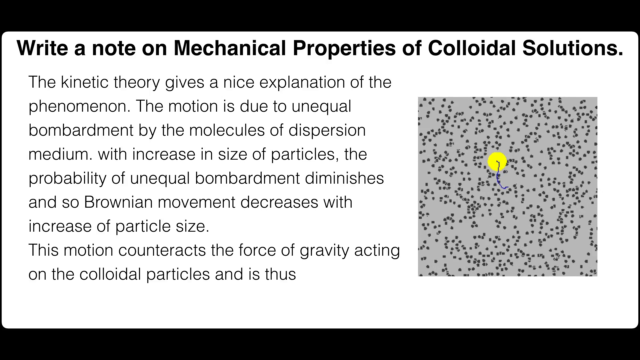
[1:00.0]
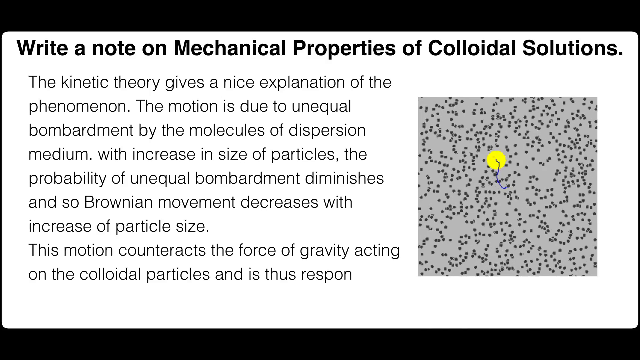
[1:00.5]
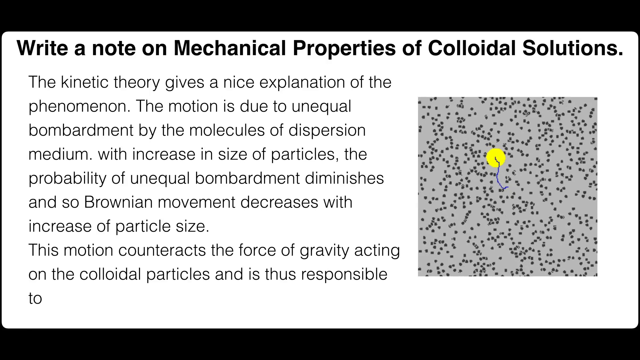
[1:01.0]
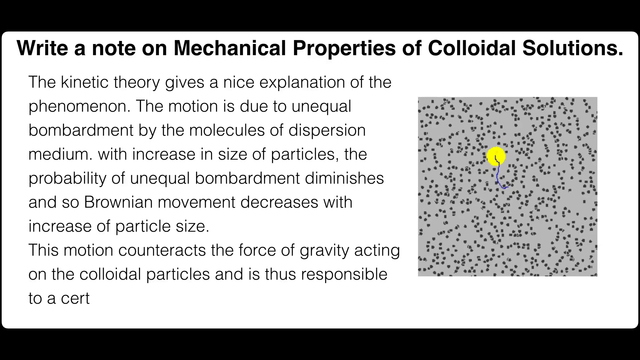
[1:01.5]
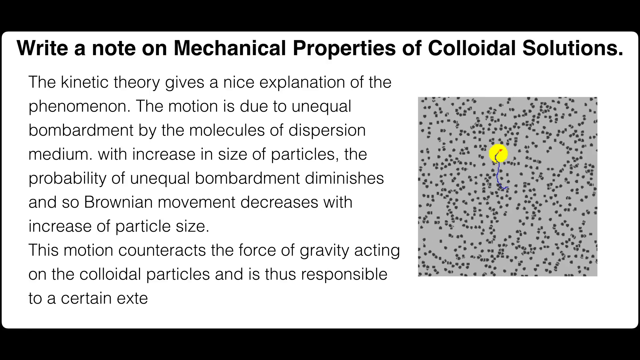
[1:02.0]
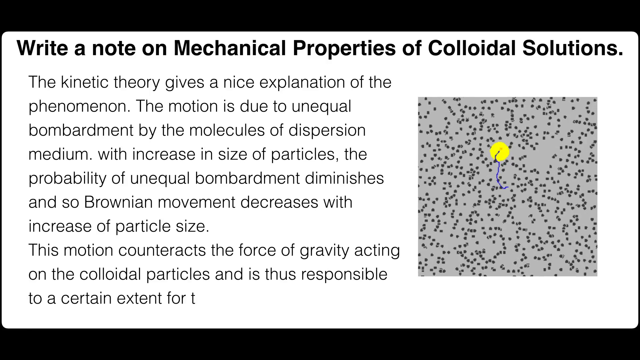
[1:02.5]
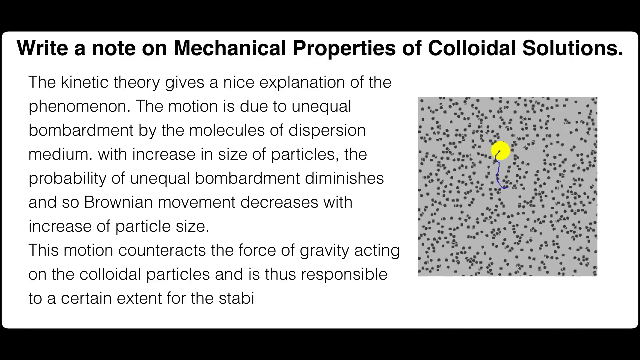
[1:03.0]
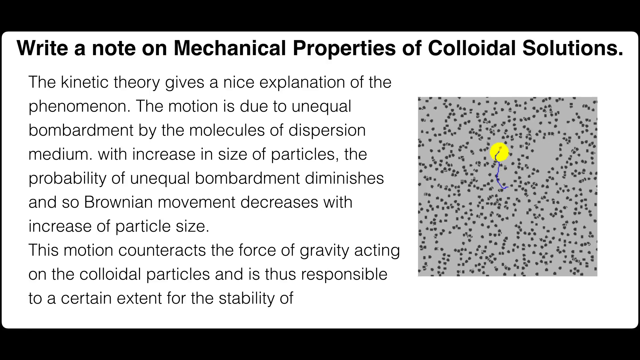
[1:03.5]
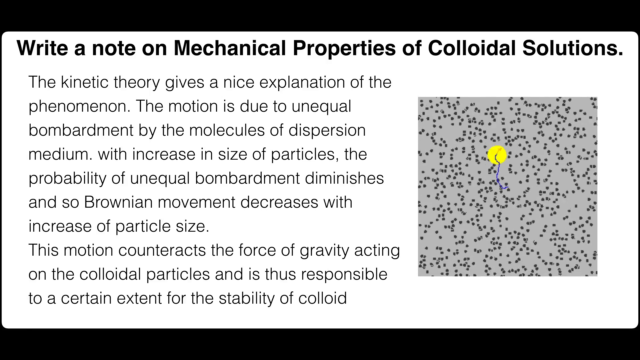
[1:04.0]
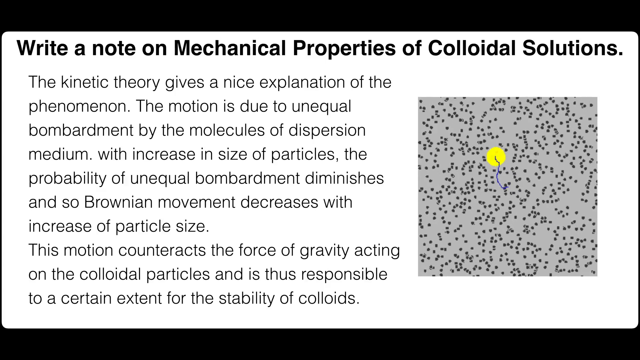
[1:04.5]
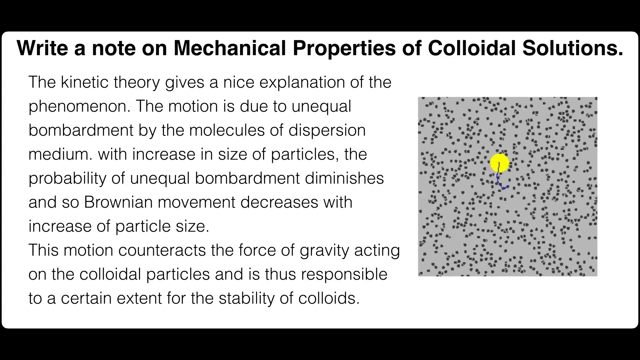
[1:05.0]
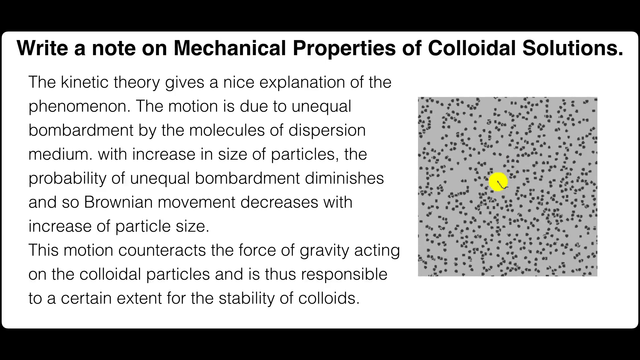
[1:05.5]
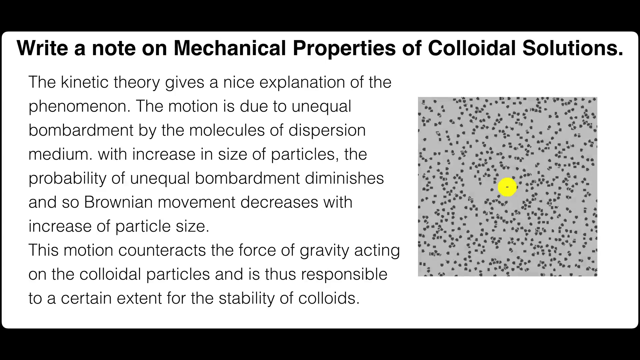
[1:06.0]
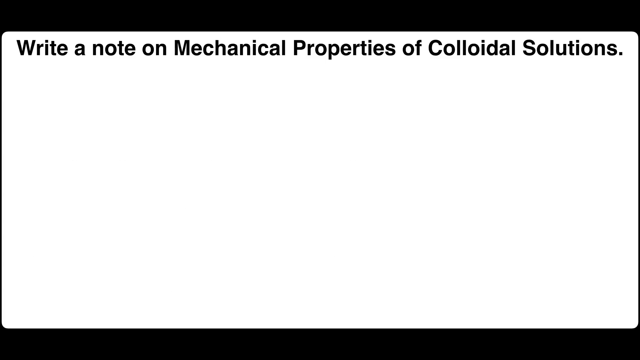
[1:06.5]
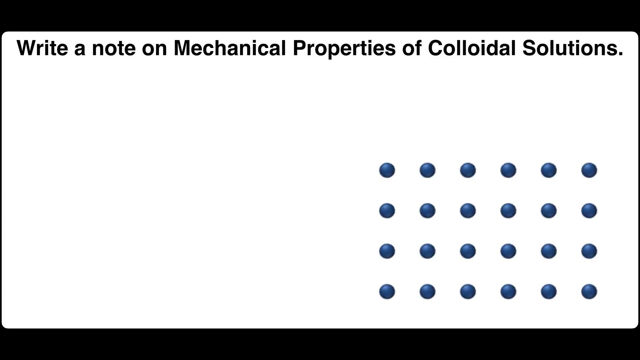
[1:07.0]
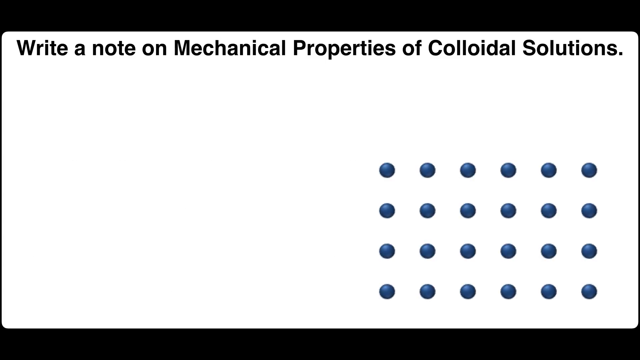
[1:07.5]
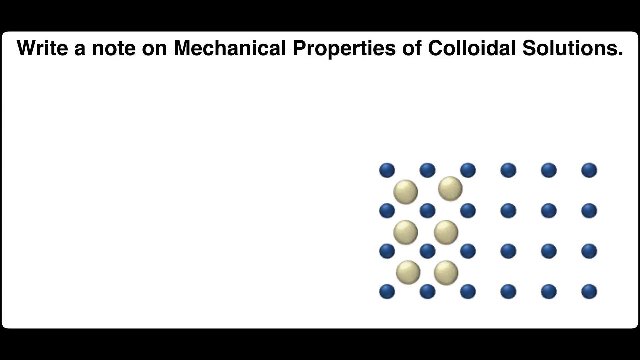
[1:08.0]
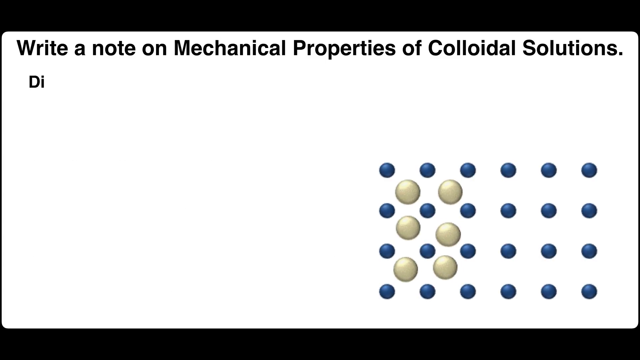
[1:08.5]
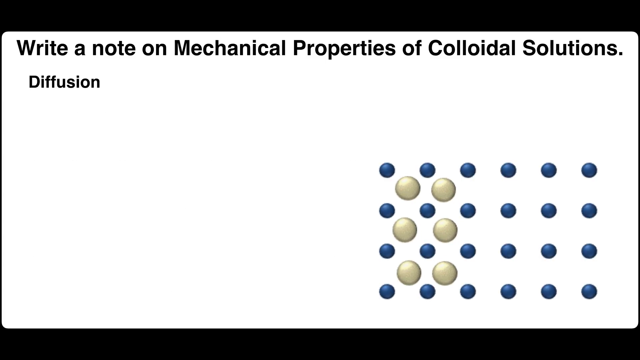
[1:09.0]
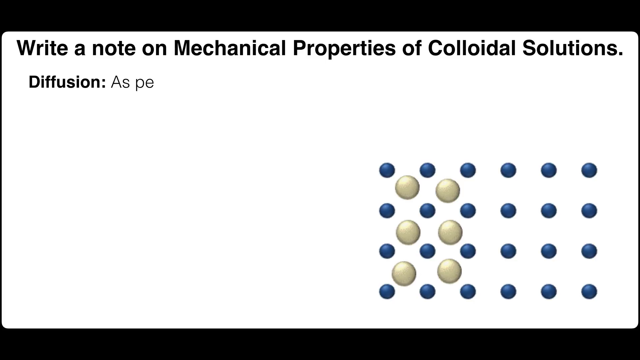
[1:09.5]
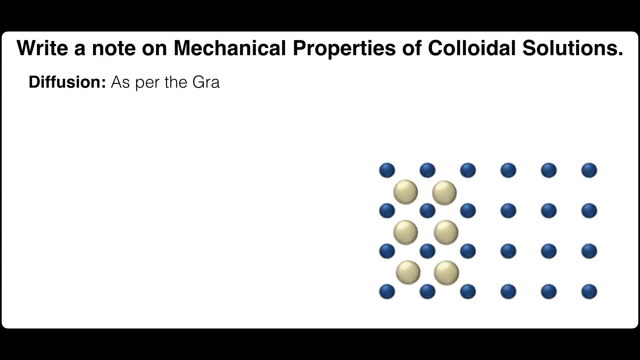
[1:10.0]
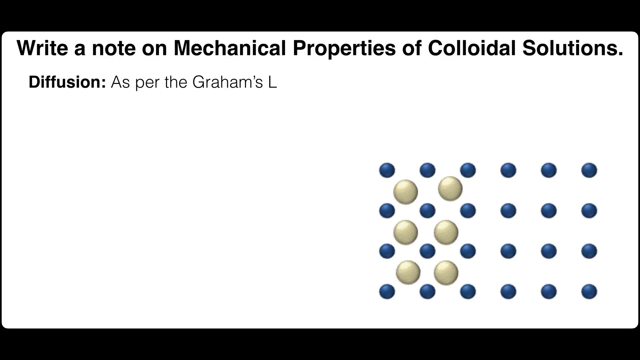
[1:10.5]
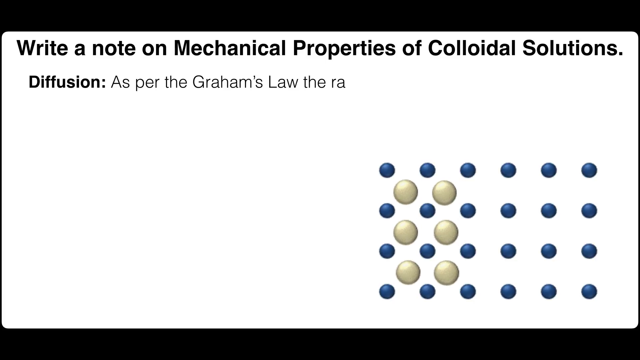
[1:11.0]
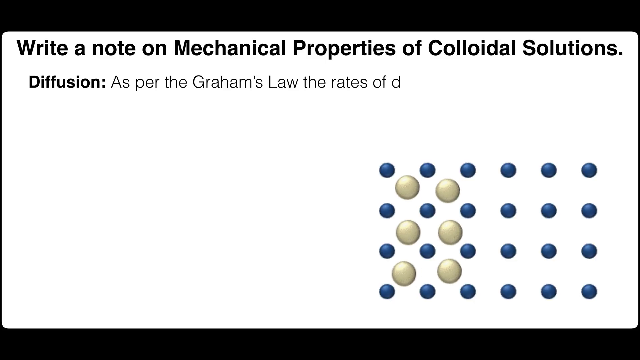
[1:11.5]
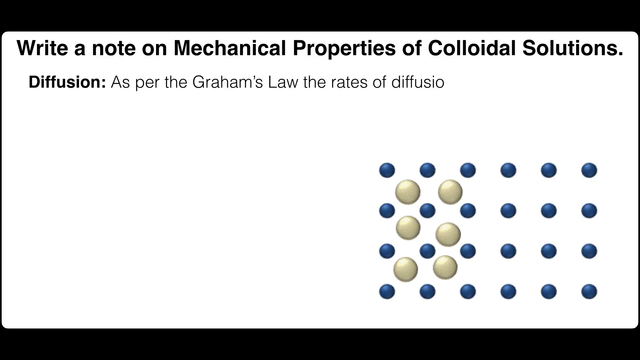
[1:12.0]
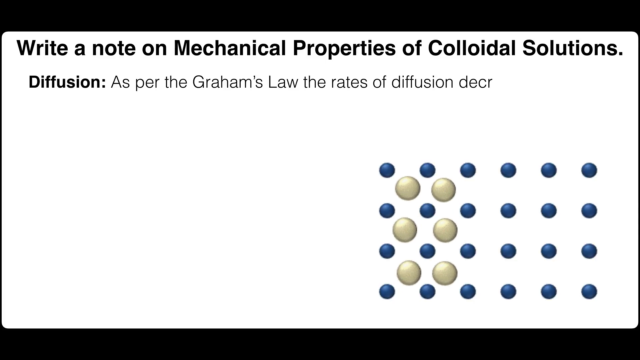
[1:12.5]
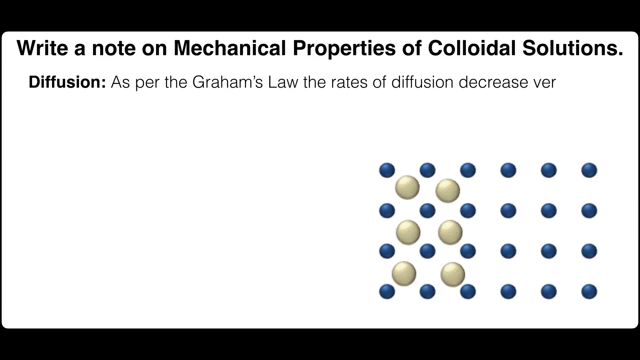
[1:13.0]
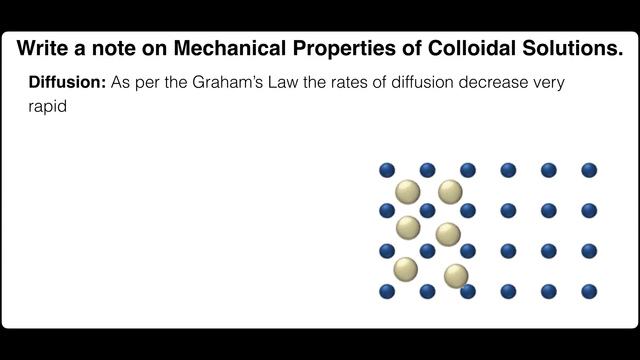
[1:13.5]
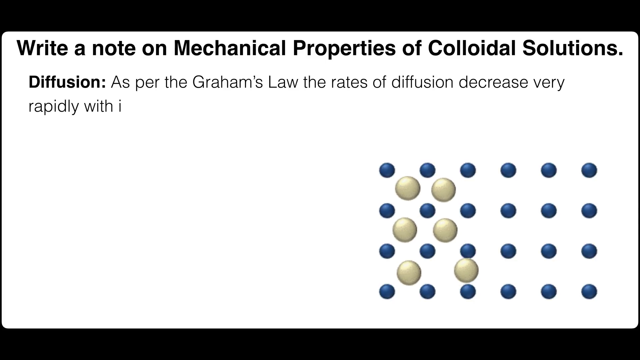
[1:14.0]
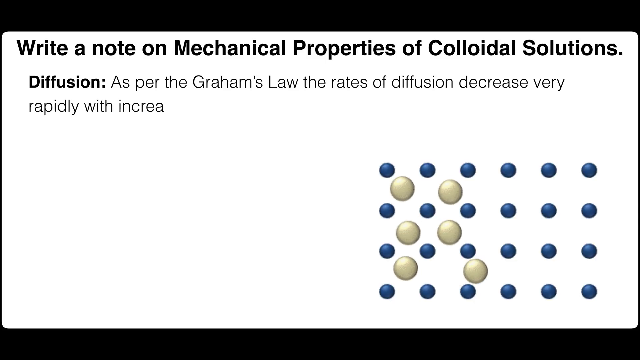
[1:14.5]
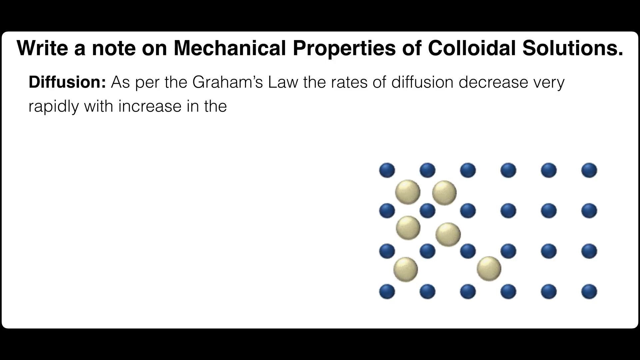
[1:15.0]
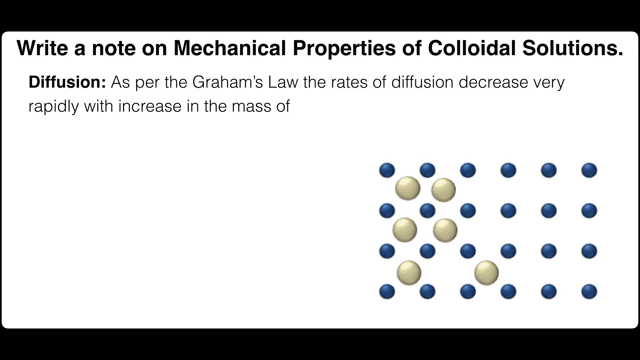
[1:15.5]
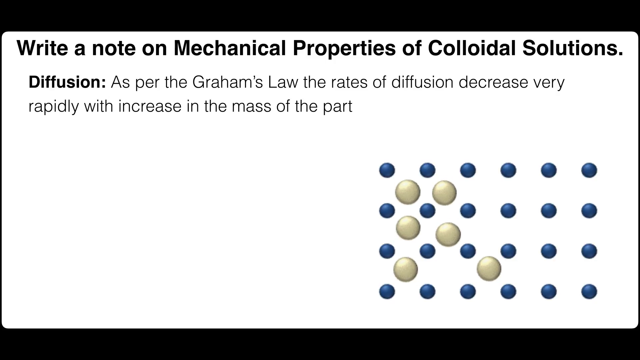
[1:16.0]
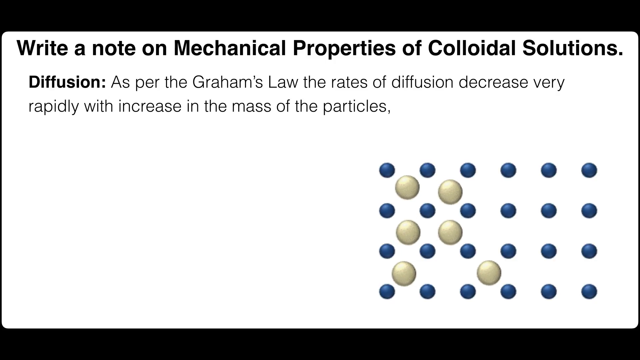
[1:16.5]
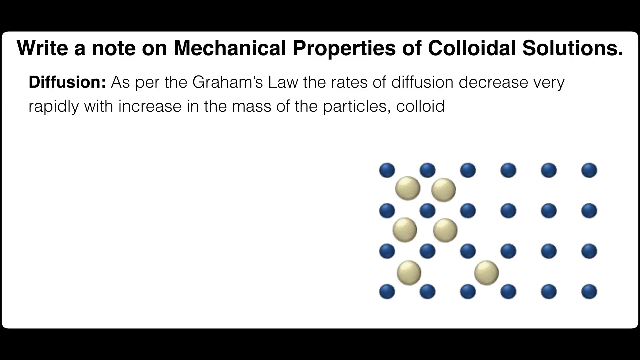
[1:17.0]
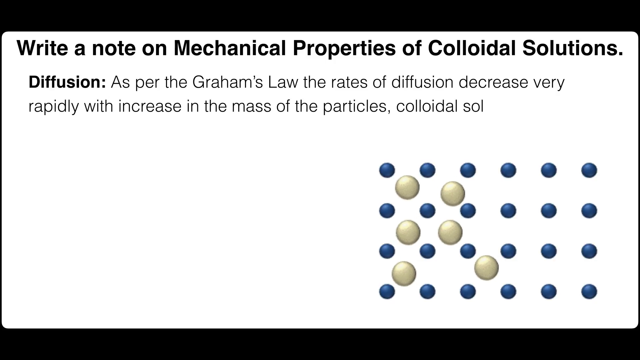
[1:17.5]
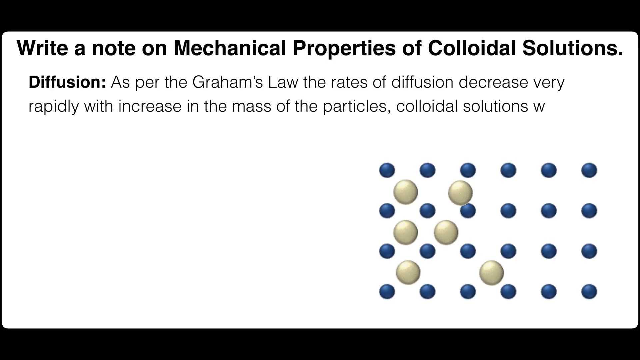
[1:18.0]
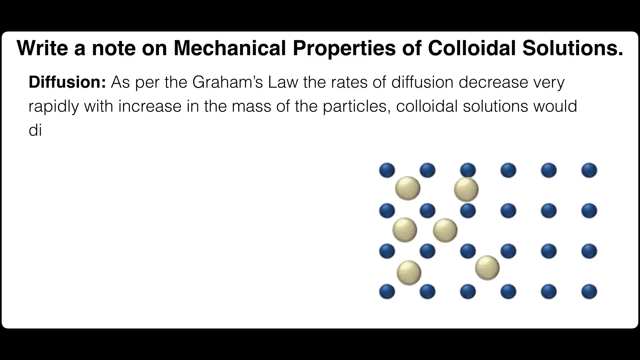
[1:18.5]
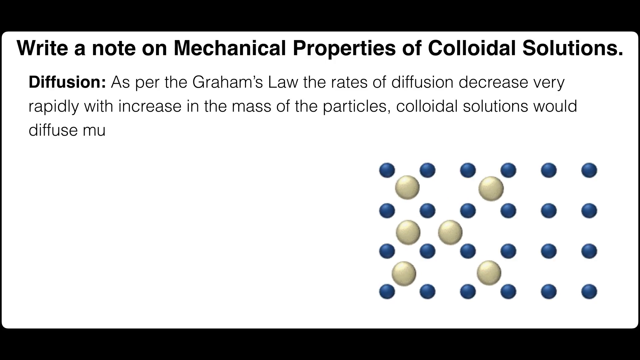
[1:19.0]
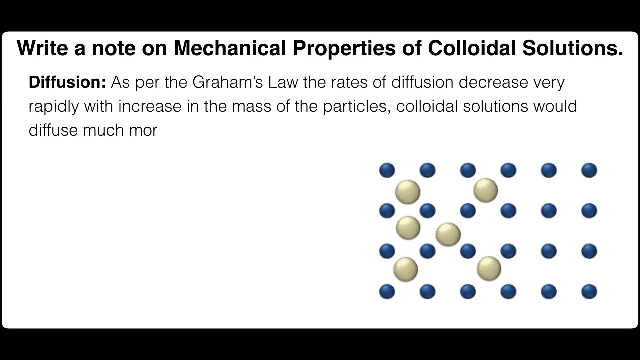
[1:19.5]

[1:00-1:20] The slide with the heading about mechanical properties of colloidal solutions remains, with the video in the right corner showing tiny dots of a colloidal suspension under a microscope and one much larger yellow dot in the middle. The particles form a zigzagging pattern called Brownian movement, which diminishes. The presentation then moves on to diffusion, demonstrated with blue and white dots of unequal sizes.